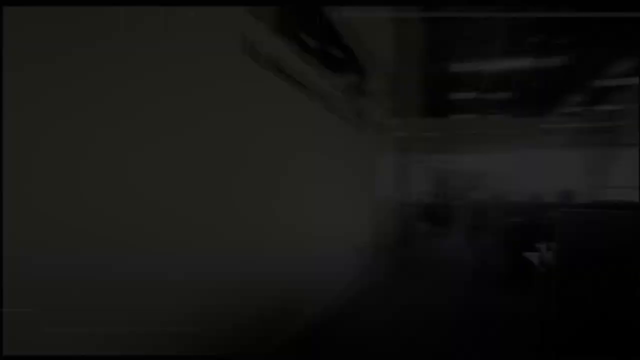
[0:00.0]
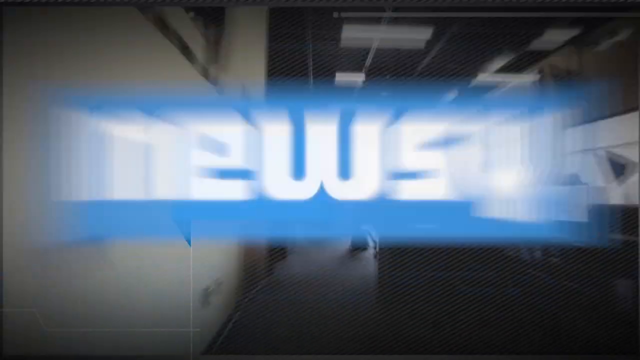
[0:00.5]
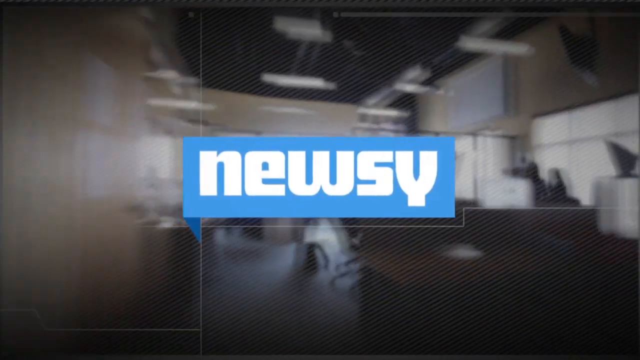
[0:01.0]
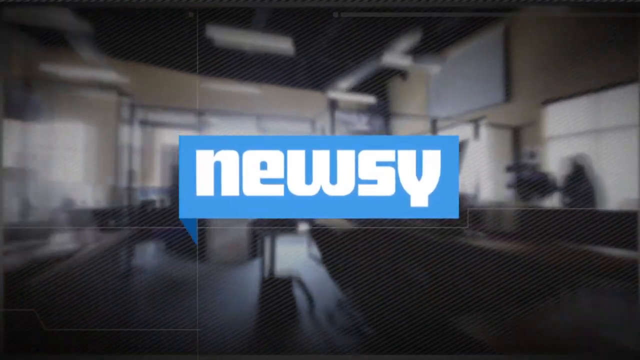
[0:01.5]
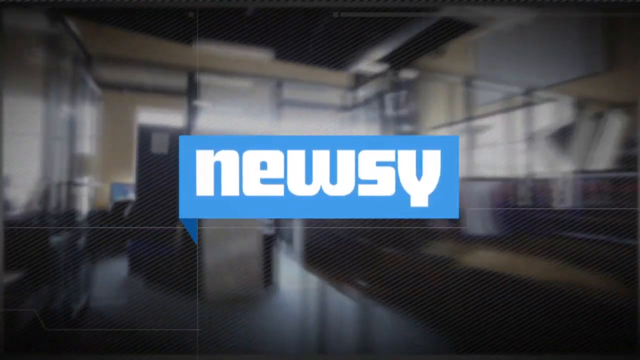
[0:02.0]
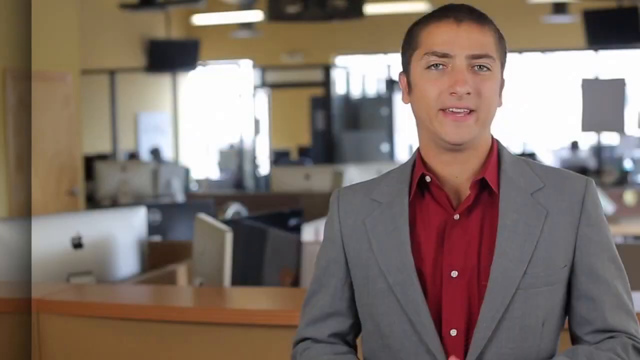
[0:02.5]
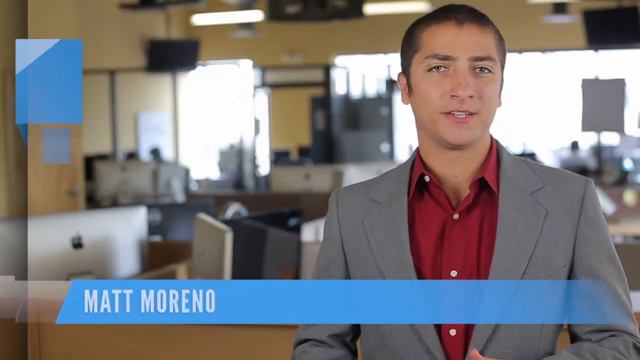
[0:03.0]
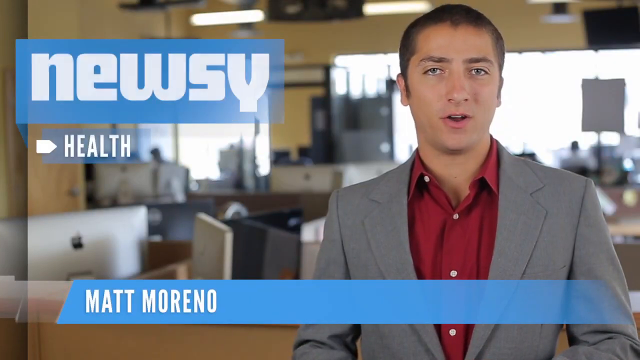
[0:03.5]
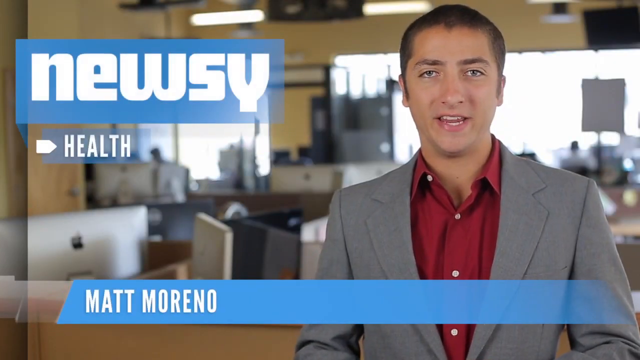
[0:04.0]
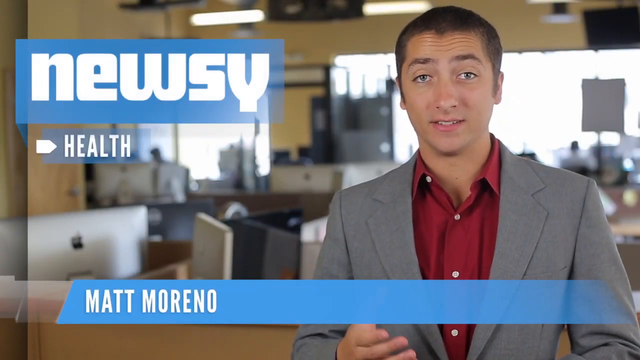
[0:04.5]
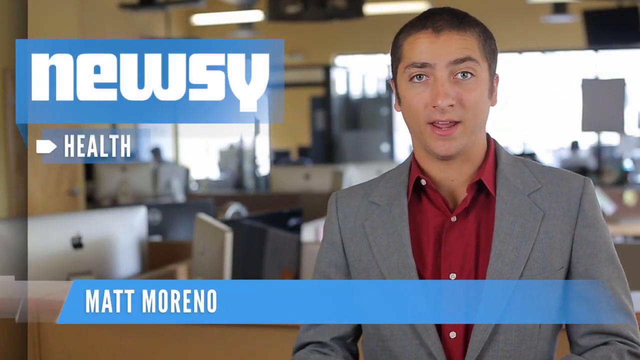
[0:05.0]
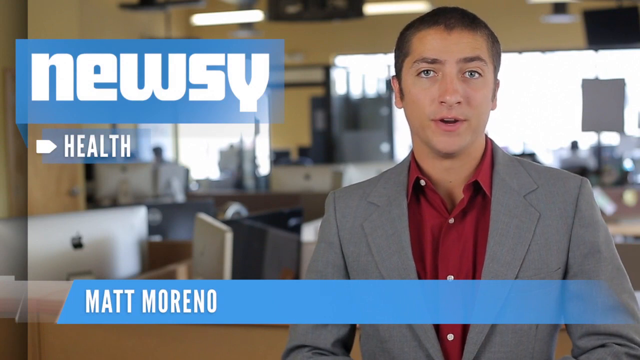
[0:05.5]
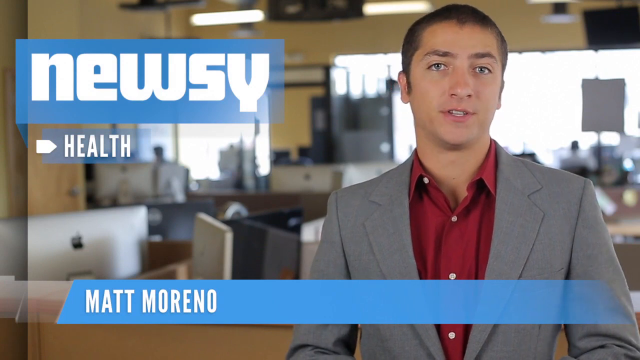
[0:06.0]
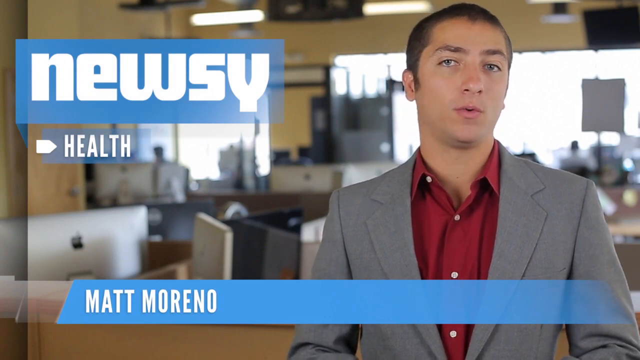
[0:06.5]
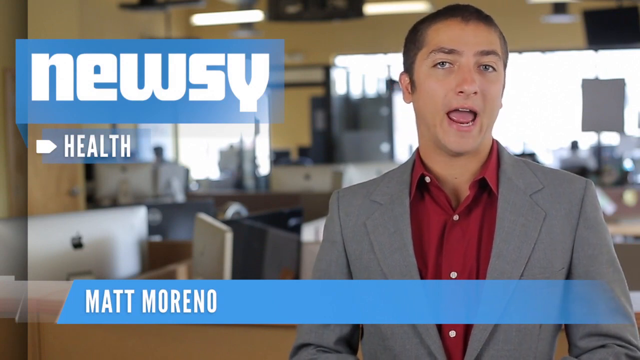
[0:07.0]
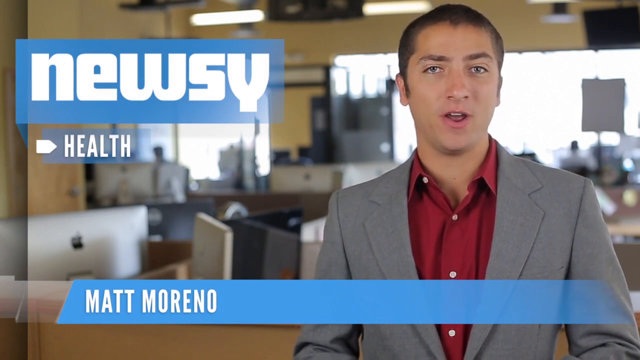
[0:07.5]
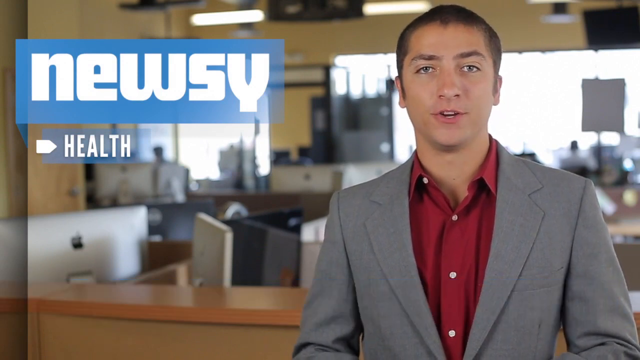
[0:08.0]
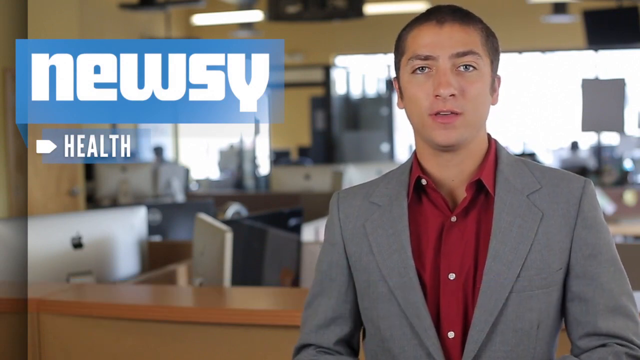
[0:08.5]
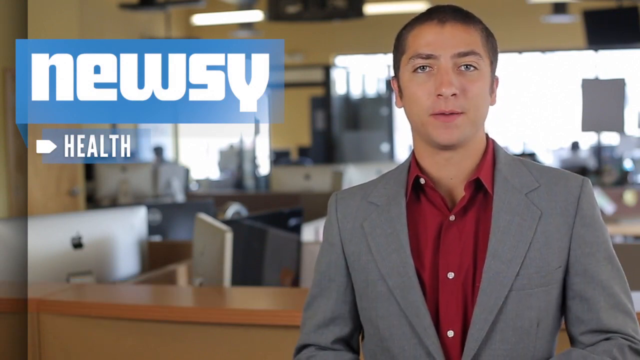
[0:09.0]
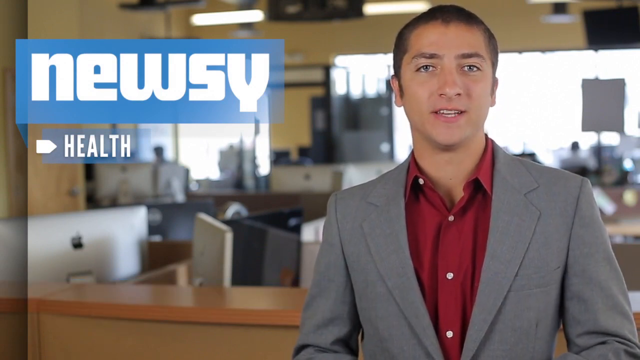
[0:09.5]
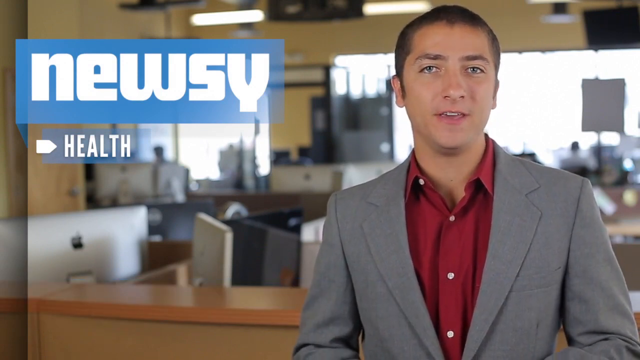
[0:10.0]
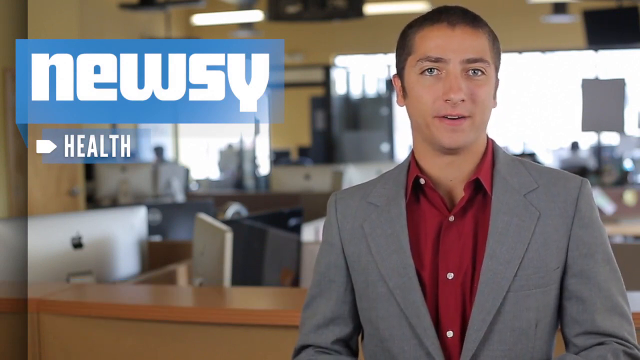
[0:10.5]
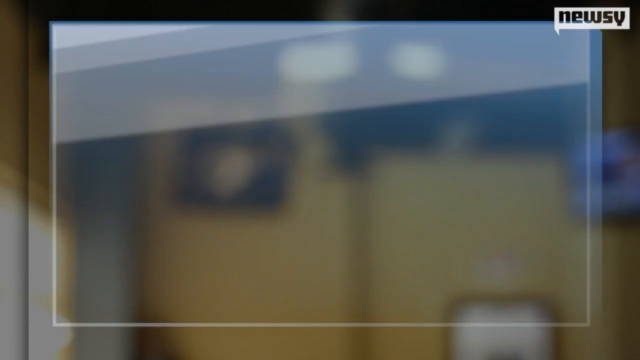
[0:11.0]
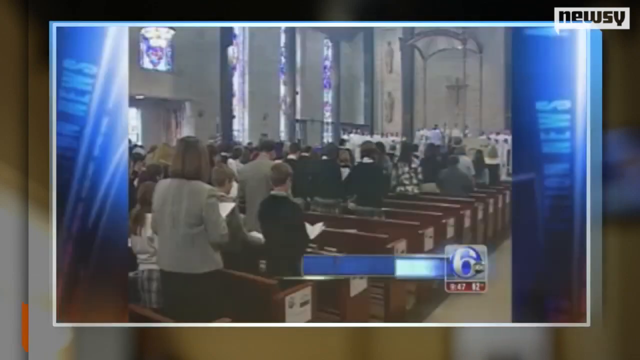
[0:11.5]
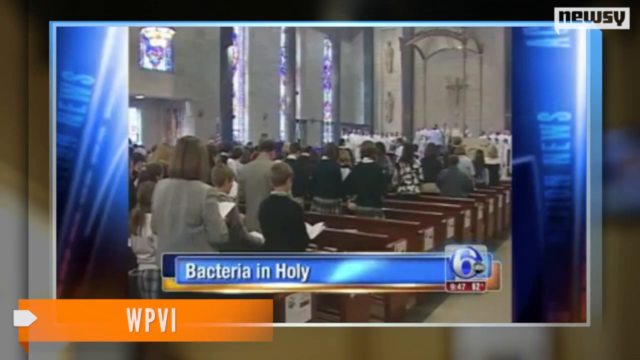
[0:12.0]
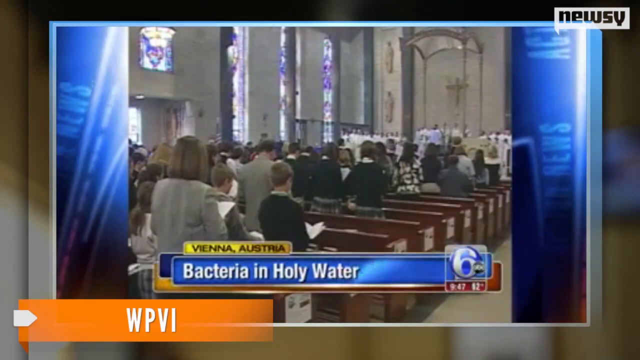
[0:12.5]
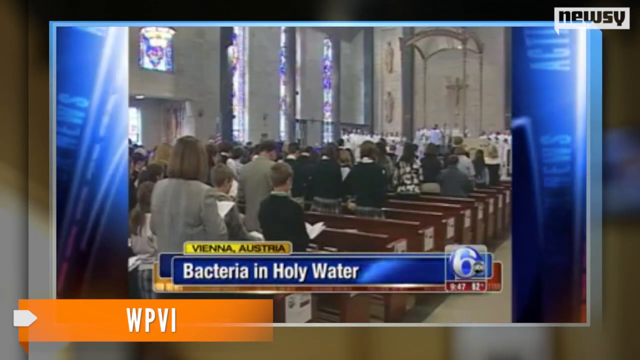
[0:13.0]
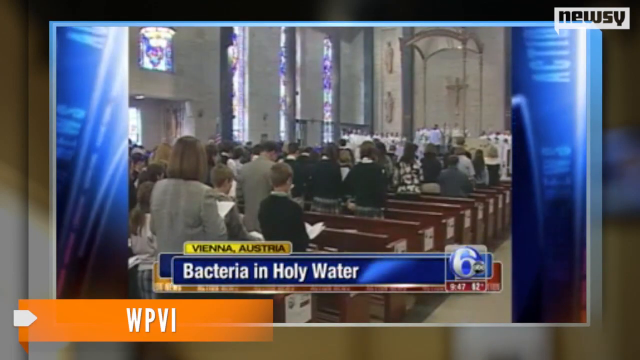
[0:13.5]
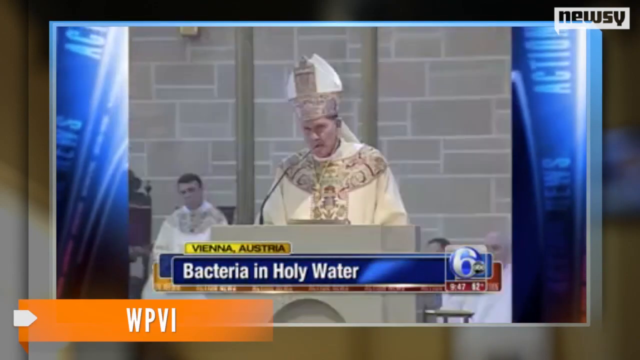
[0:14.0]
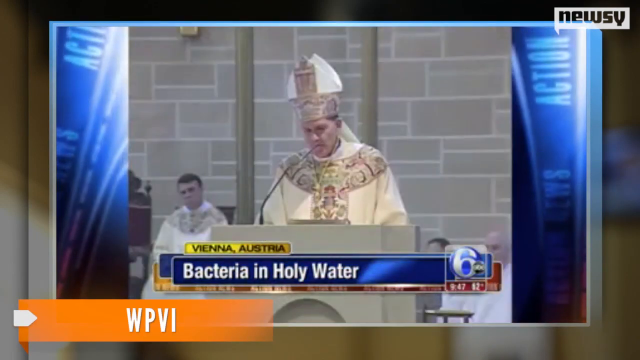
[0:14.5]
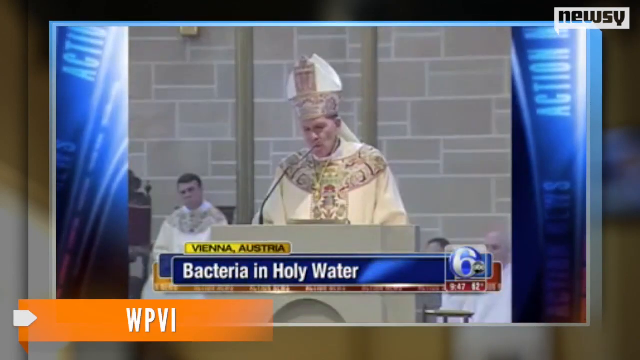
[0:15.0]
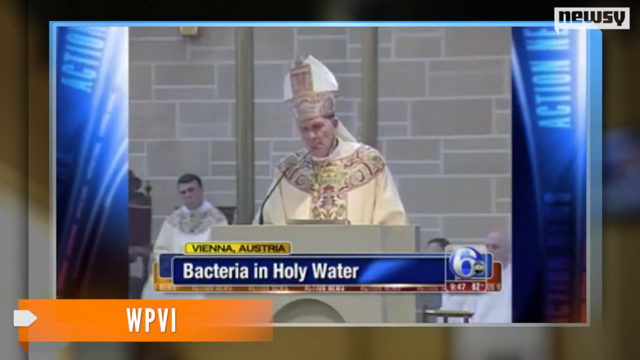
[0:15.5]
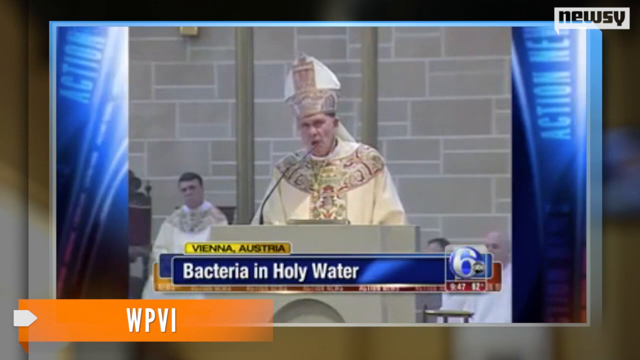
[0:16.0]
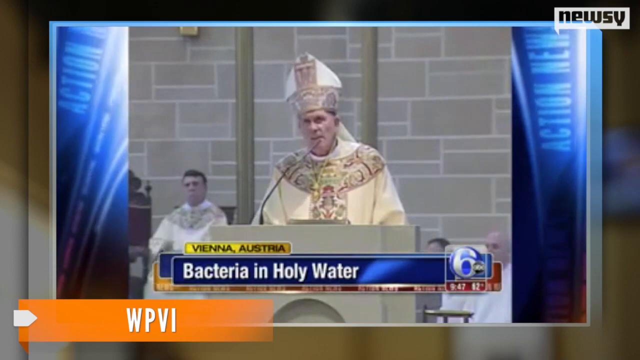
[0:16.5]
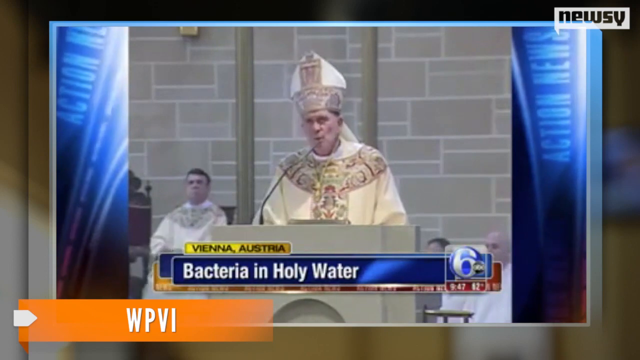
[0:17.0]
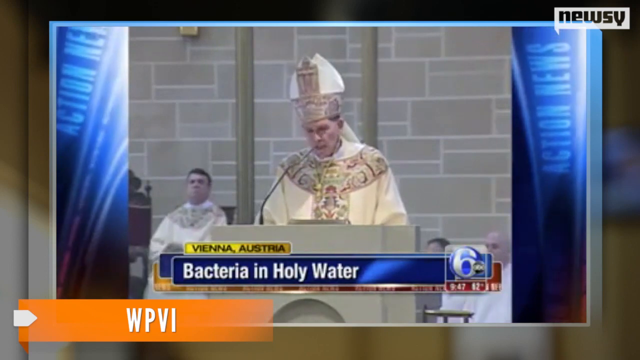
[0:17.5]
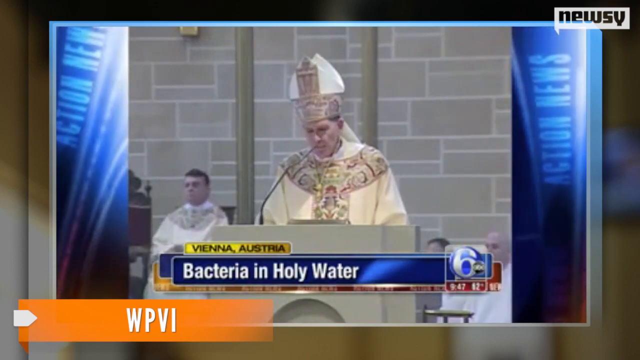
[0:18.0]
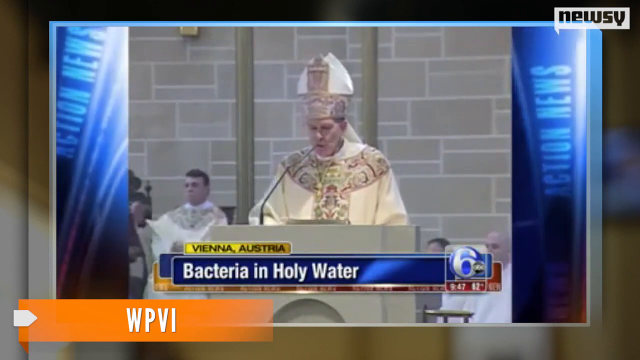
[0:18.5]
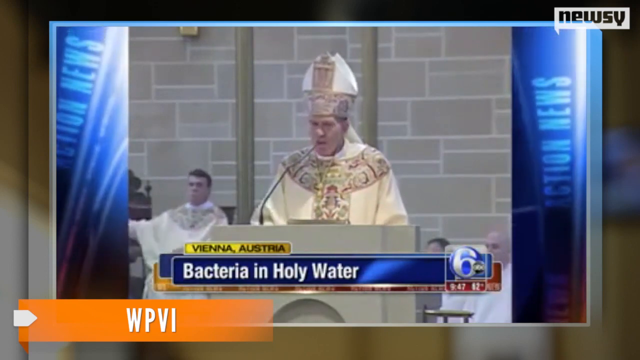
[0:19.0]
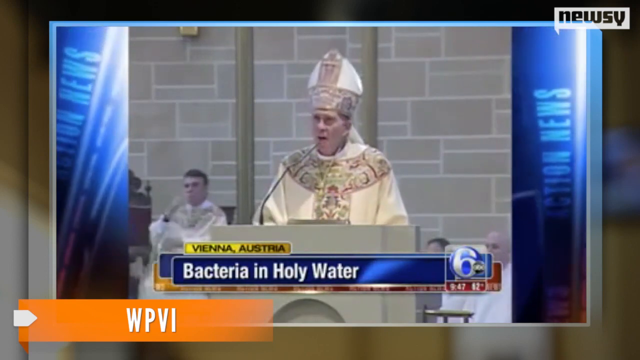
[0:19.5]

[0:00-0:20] The video opens with an intro for the Newsy program in blue colors. The text "Newsy Health" appears along with reporter Matt Moreno, who has short brown hair and wears a red shirt and a gray suit. He talks to the camera about bacteria in holy water in Vienna, Austria. Footage follows of a priest talking about the situation in the church. The reporter stands in an office in front of the camera; behind him are a great many computers on many desks.